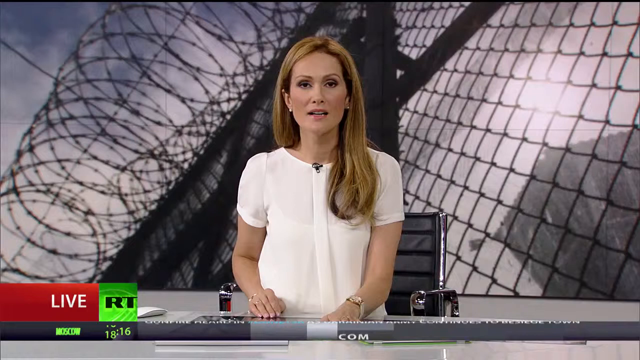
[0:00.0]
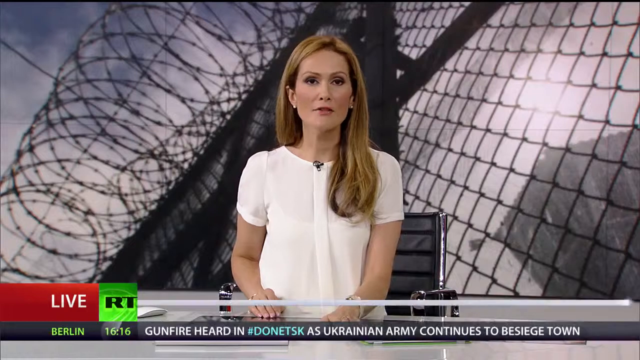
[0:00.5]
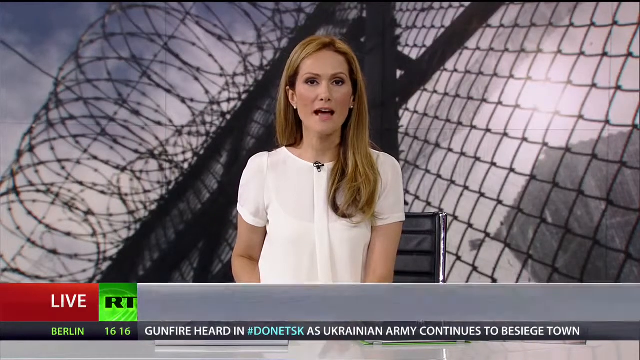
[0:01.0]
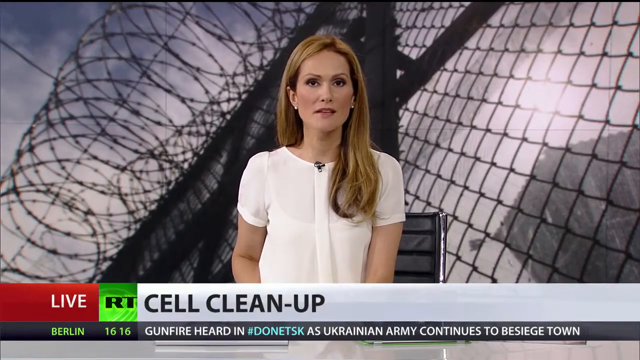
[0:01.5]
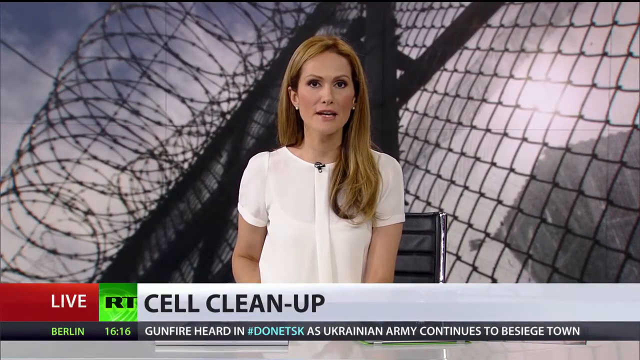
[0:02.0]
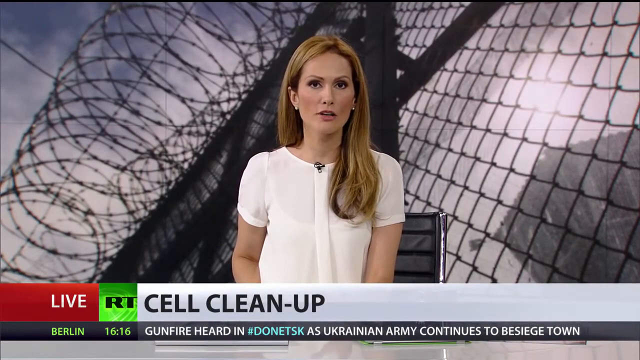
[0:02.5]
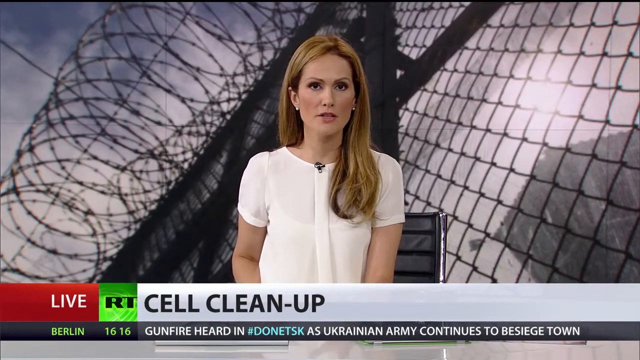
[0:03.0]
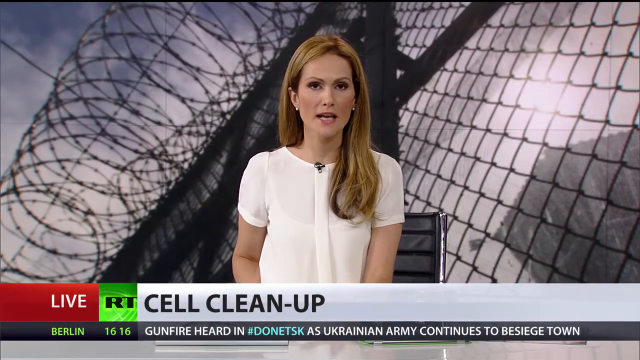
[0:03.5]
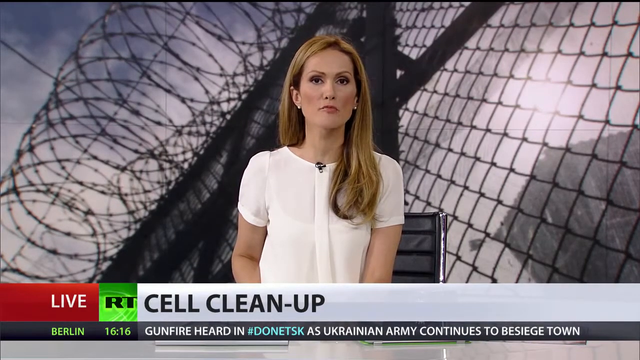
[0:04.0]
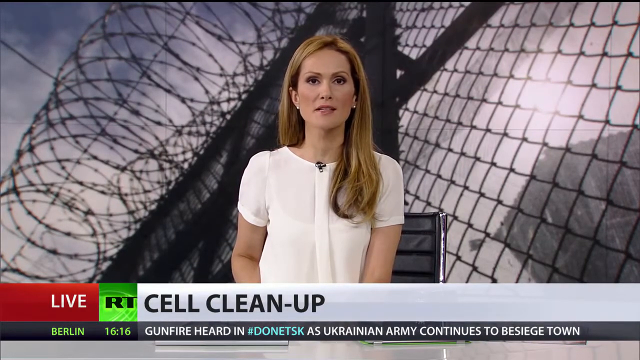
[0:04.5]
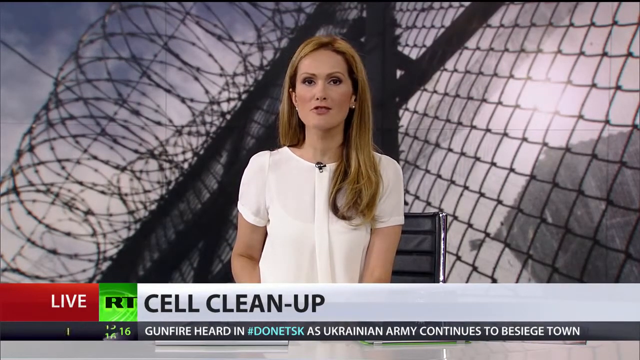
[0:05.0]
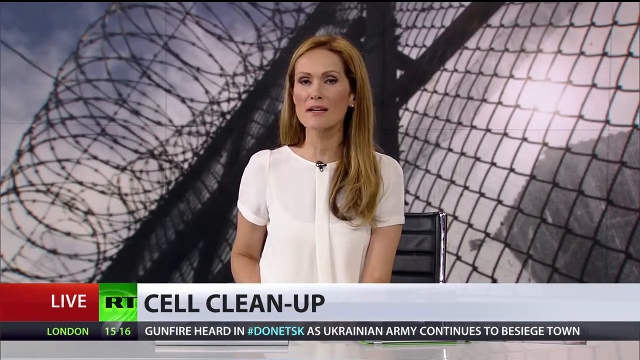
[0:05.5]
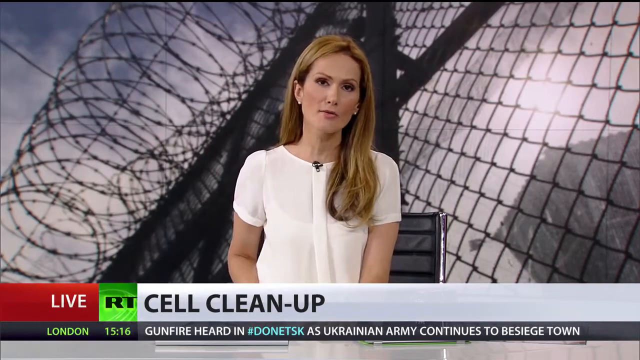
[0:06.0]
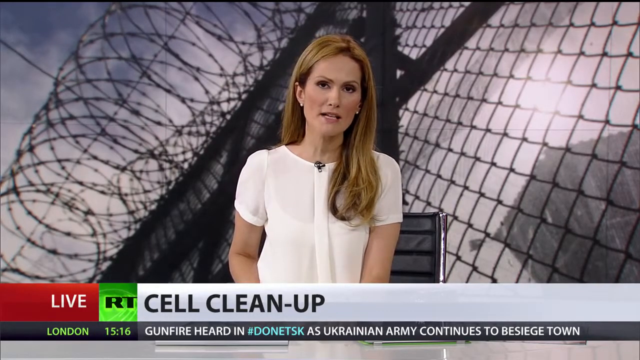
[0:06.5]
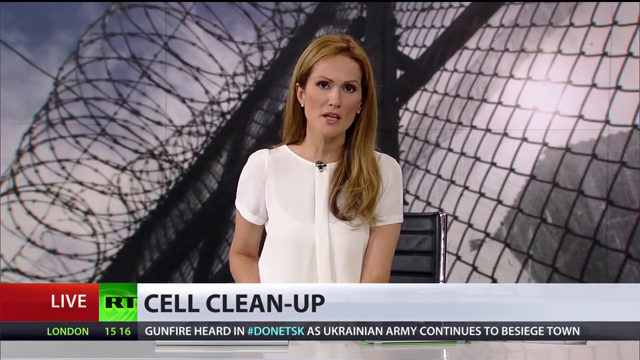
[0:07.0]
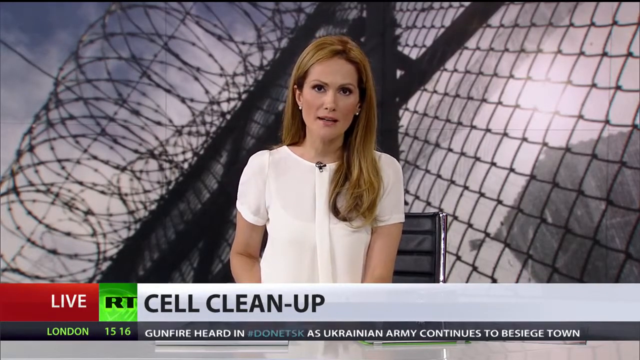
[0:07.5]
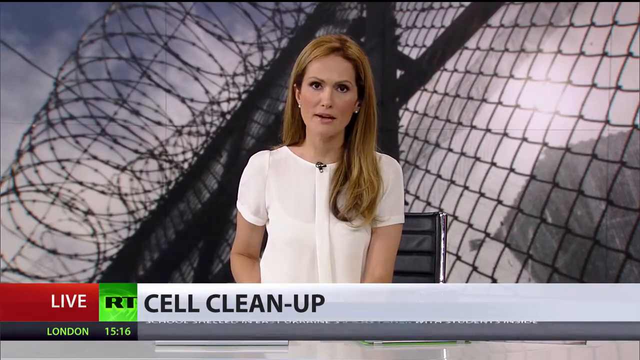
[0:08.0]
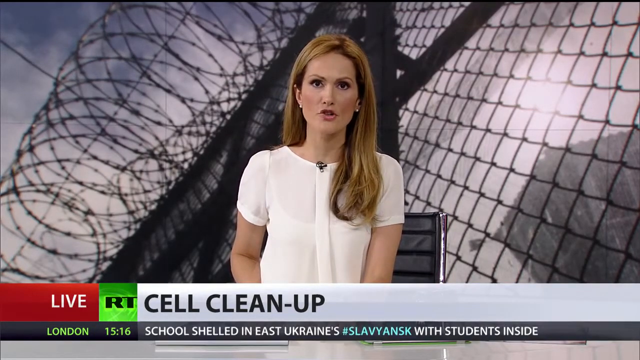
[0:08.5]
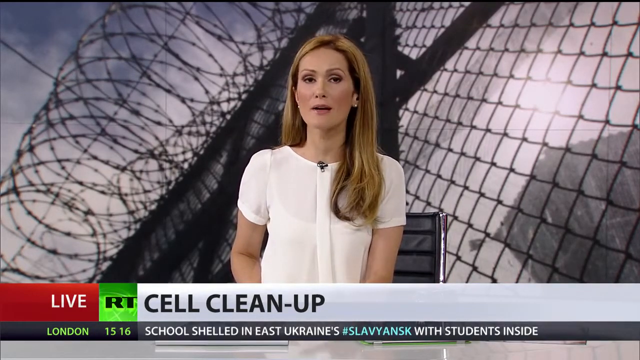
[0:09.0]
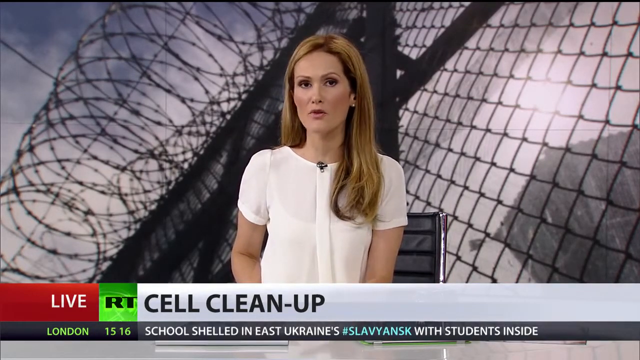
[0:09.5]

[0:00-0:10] A female news reporter wears a white short-sleeve blouse and a watch on her left hand. Her mic is clipped at the middle of her neckline on her shirt, and her hair is about mid-chest length. Behind her is what looks like a green-screen image of a close-up barbed wire fence. At the bottom of the screen the word "live" appears, and then the topic "cell cleanup" comes up while she talks. News tickers at the bottom show other events, including "gunfire heard as ukraine army continues to besiege town" and an item about a school in East Ukraine. The cell cleanup topic is possibly associated with a prison, given the barbed wire behind her.